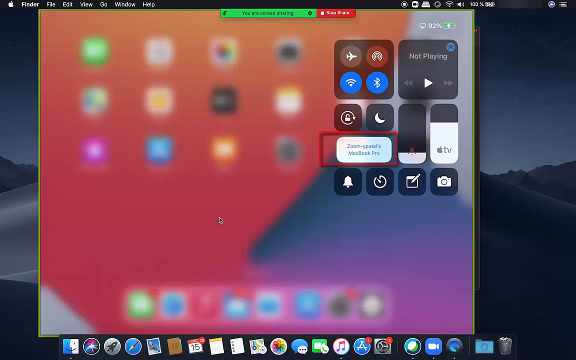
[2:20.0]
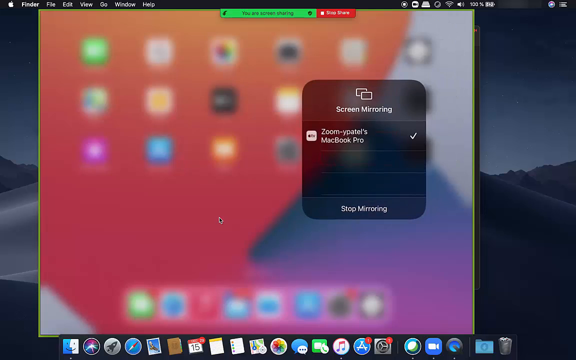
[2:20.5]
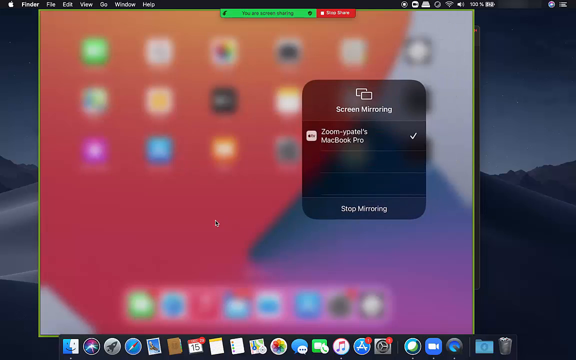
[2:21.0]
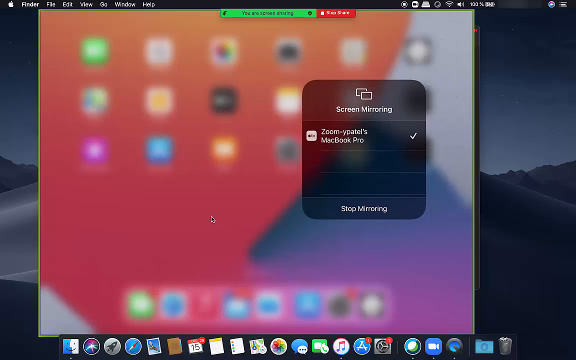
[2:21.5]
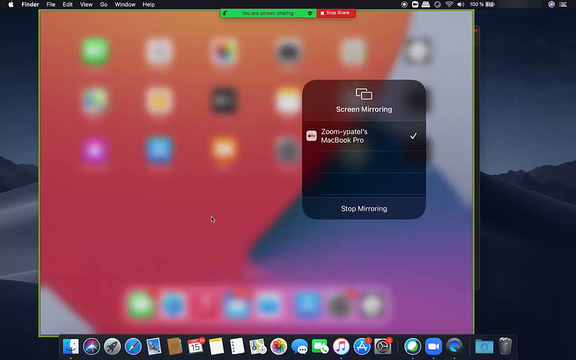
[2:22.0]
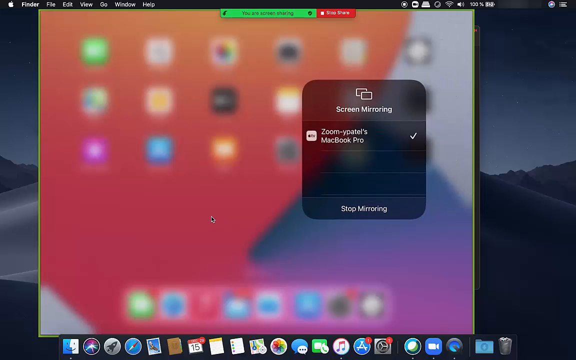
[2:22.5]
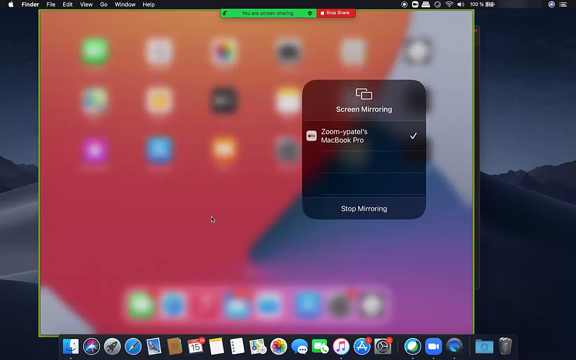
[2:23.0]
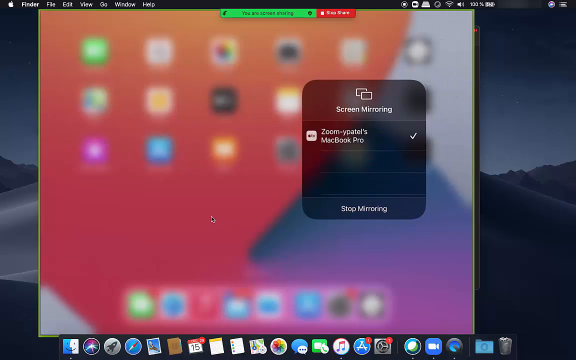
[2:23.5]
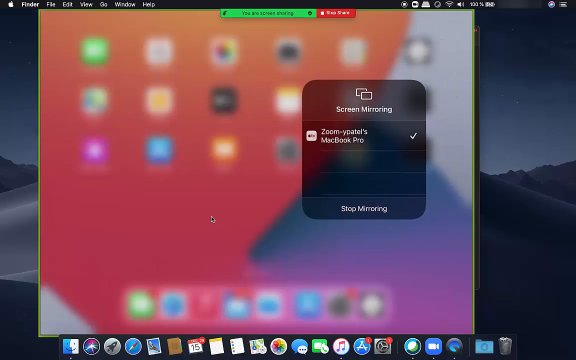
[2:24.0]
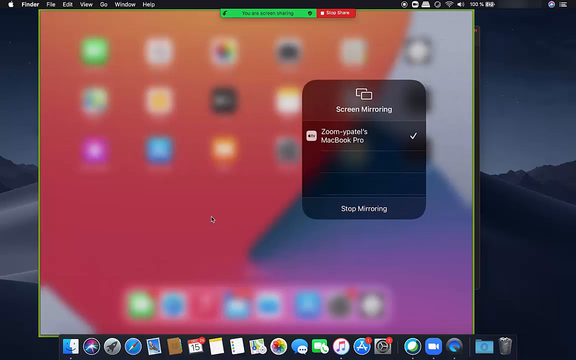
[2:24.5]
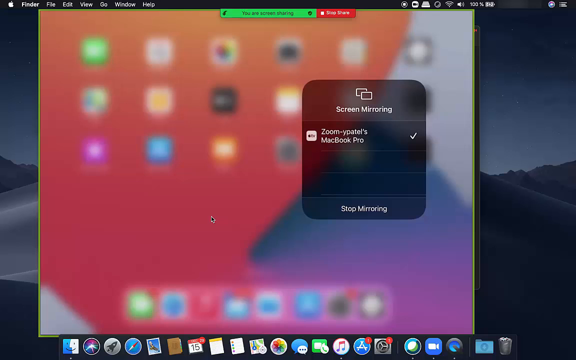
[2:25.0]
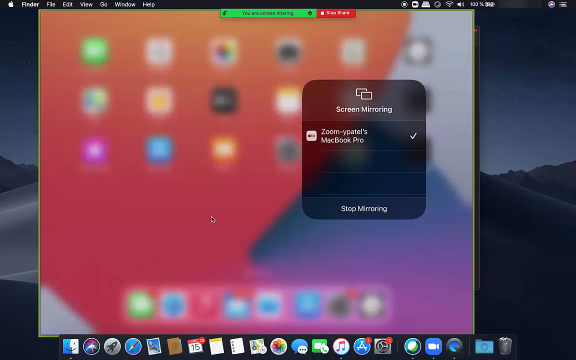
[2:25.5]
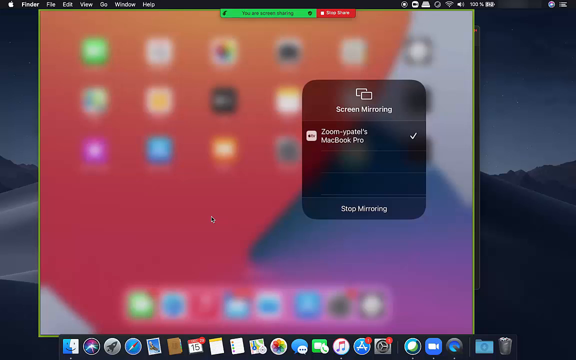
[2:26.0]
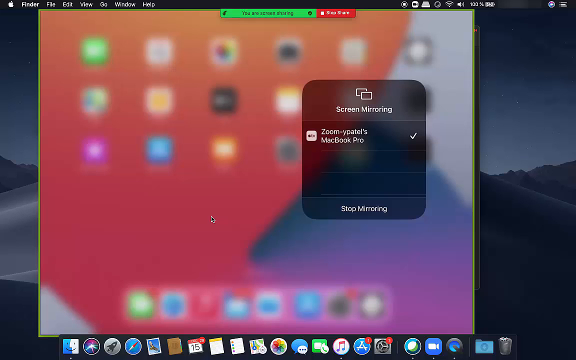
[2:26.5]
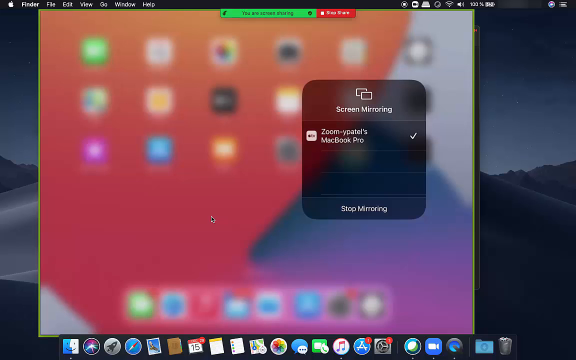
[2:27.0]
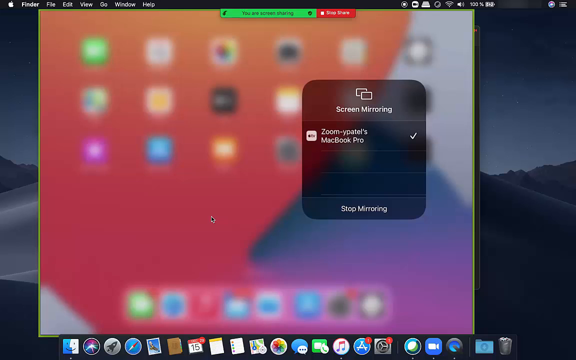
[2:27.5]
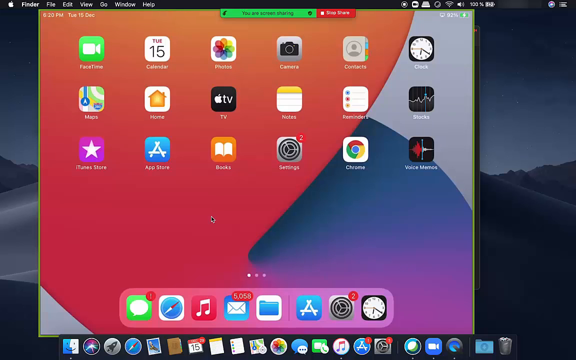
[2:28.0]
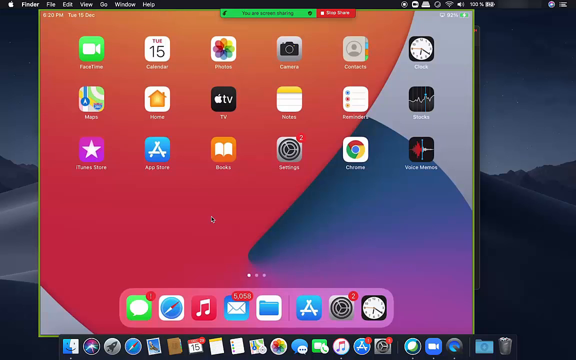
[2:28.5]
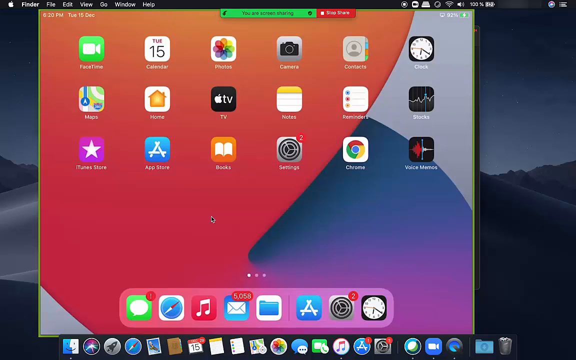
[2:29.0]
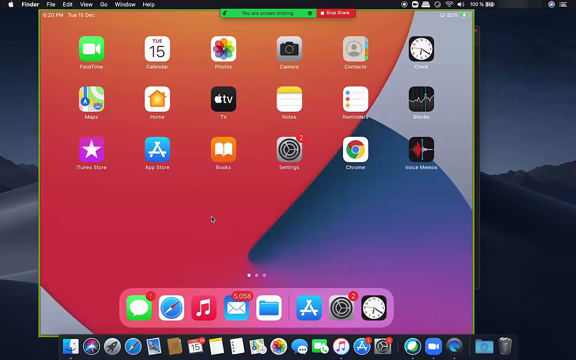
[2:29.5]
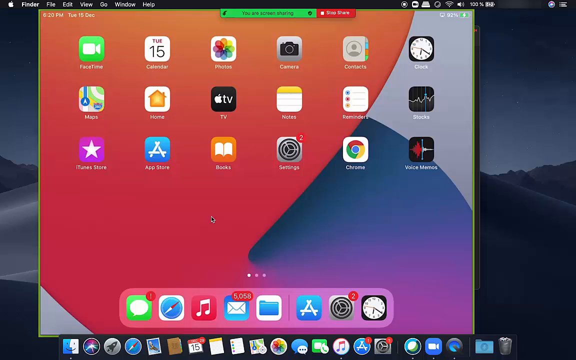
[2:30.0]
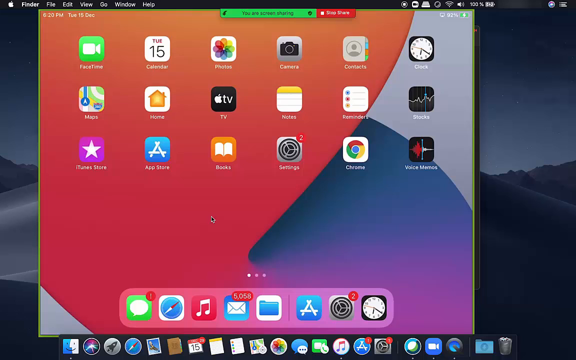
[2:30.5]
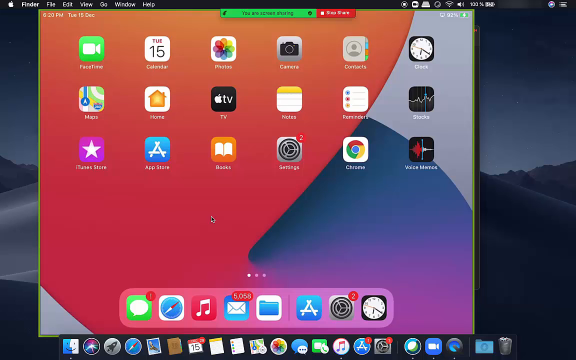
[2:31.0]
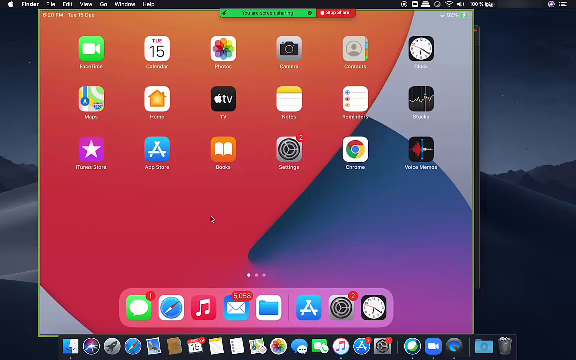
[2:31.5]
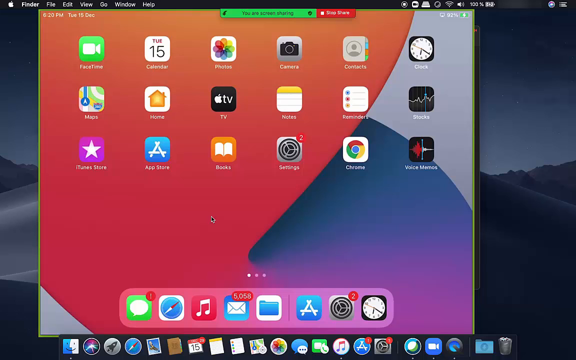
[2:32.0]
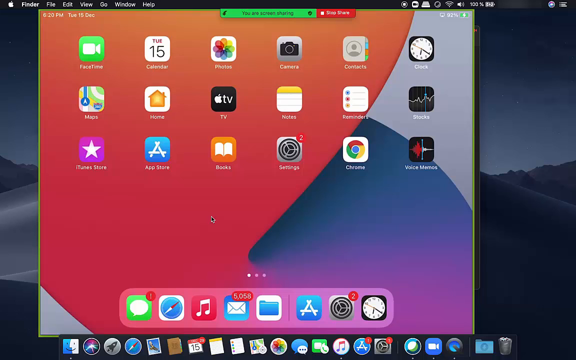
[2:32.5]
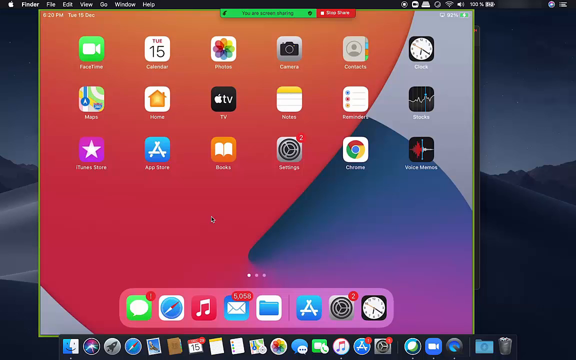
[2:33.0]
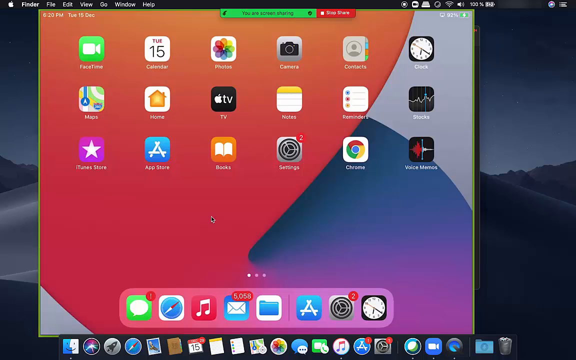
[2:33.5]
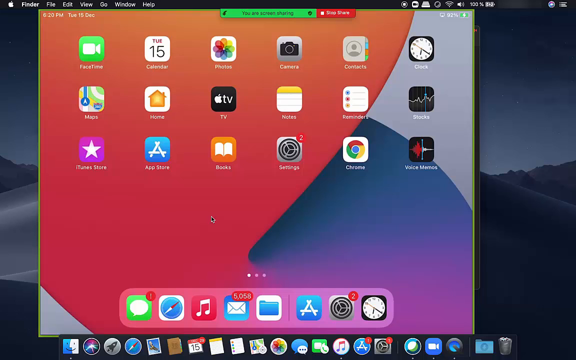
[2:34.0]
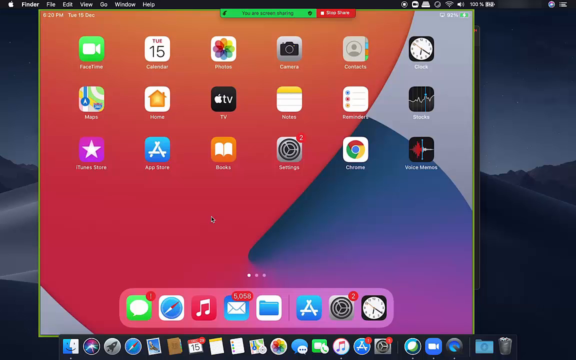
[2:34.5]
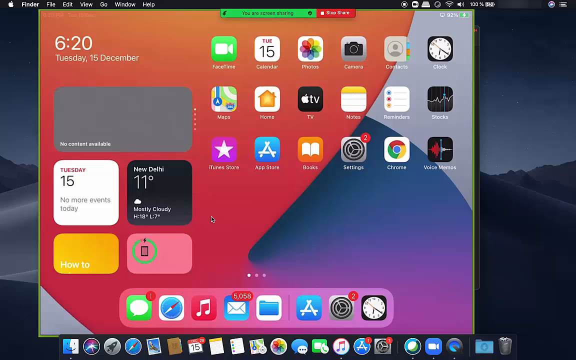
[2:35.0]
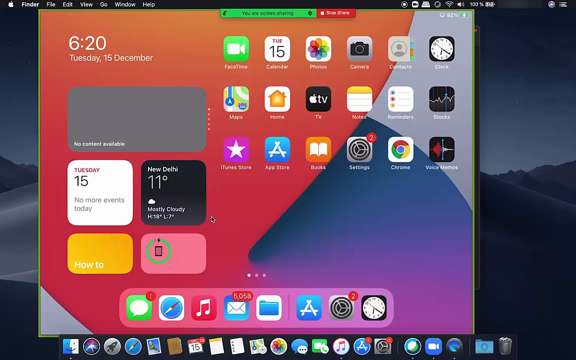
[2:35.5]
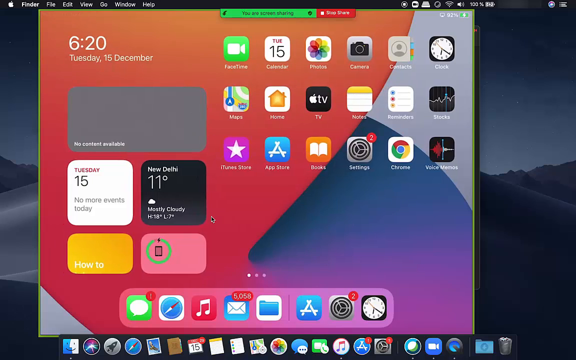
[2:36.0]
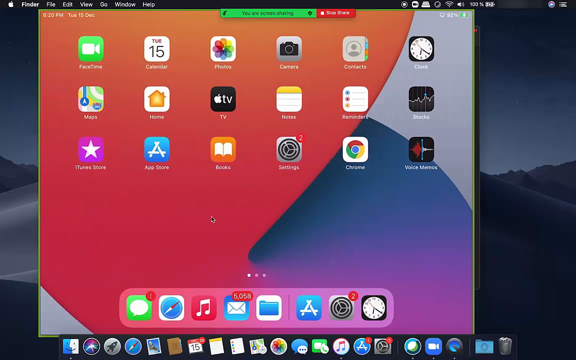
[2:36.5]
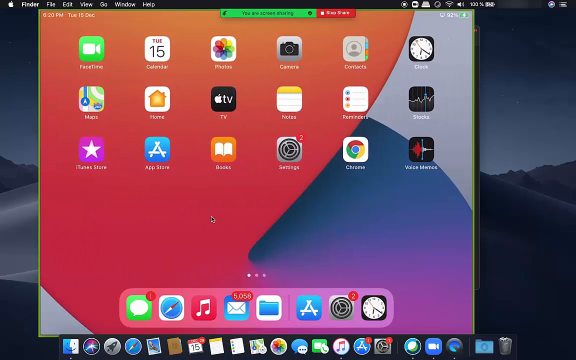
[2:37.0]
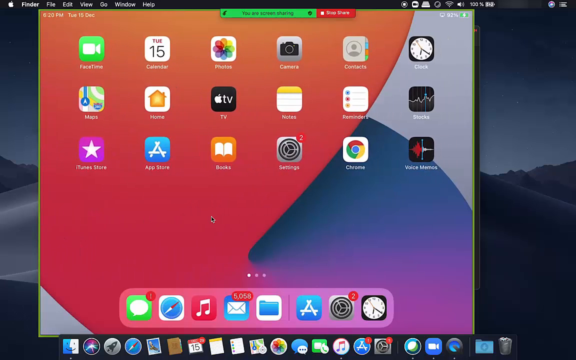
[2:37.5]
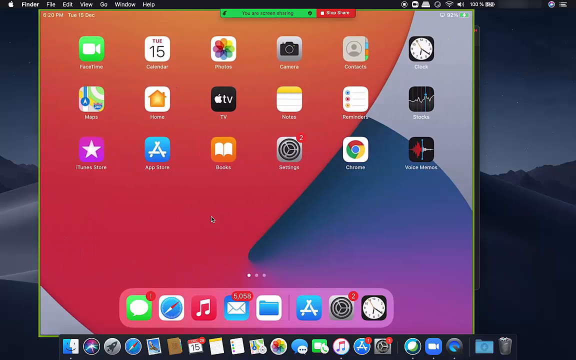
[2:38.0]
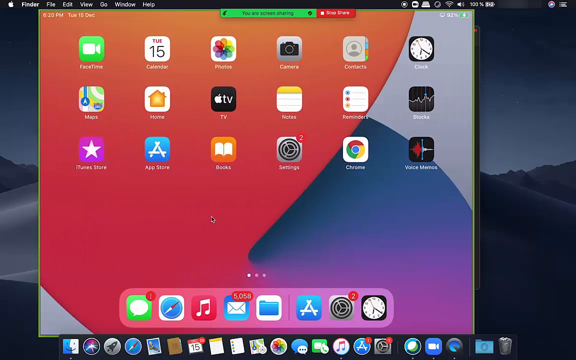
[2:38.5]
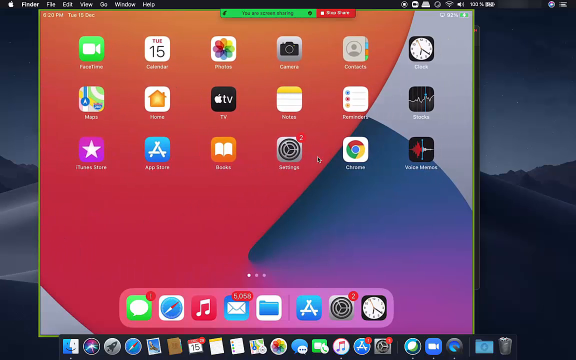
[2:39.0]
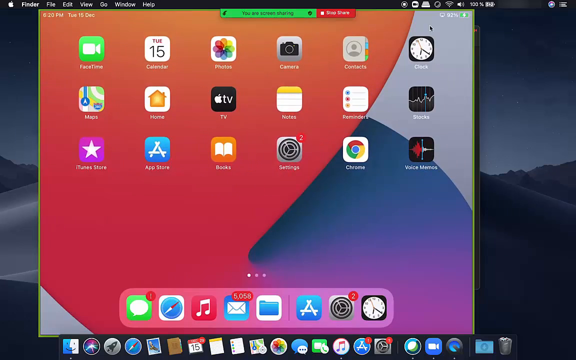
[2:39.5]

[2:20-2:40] A computer screen shows a screensaver: a nighttime scene of a very smooth hill made of sand. One side of the sand is lighter in color because it faces the moon and receives moonlight, while the back side is darker because it is blocked by the left side. The sky is very dark except where it meets the horizon, where it is a little lighter. At the top are settings, symbols, battery life and other standard computer symbols, and there is a search bar. Someone types "zoom us" into it. A pop-up appears, and a red square is placed around an icon. The name "Yogesh Patel" appears in the middle of the screen. A green icon is clicked, and another pop-up appears, some sort of desktop, highlighted with a blue border, and the third option is also highlighted in blue. They click on it and hit install, installing the Zoom program. Directions then appear on how to access Zoom on the MacBook Pro.